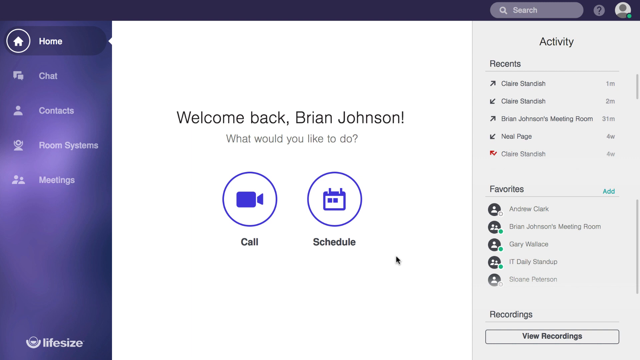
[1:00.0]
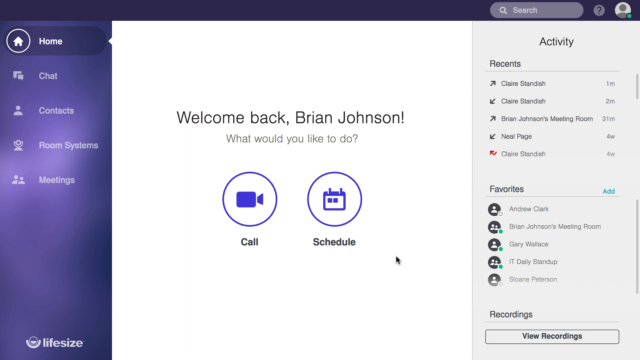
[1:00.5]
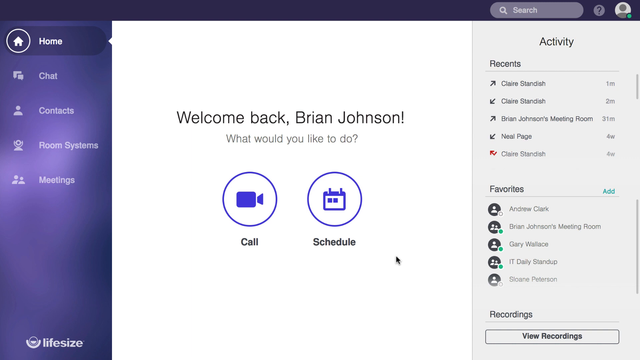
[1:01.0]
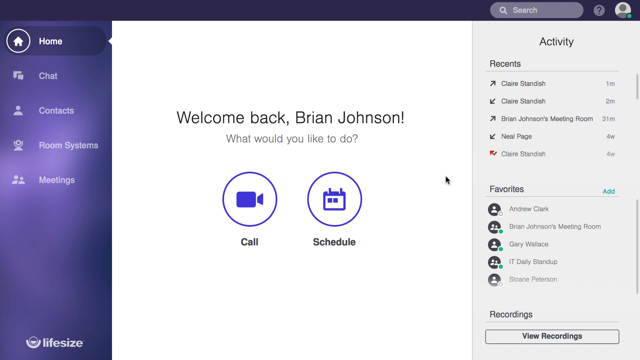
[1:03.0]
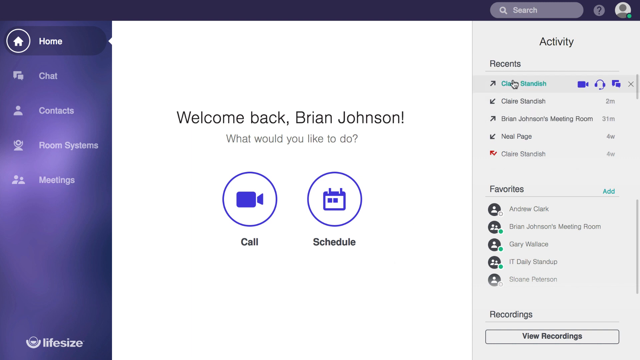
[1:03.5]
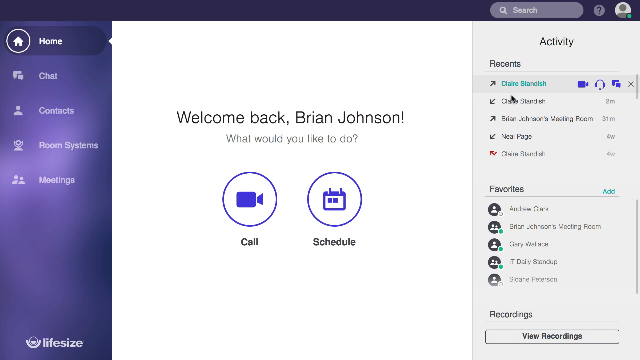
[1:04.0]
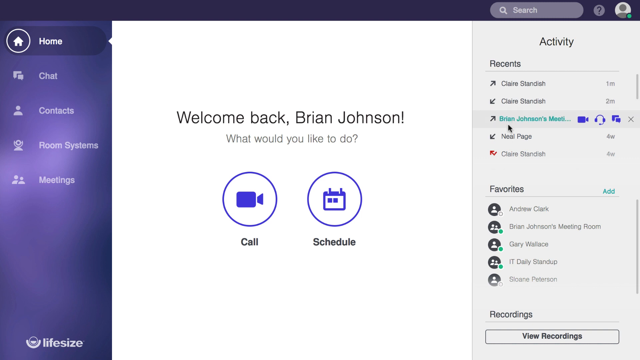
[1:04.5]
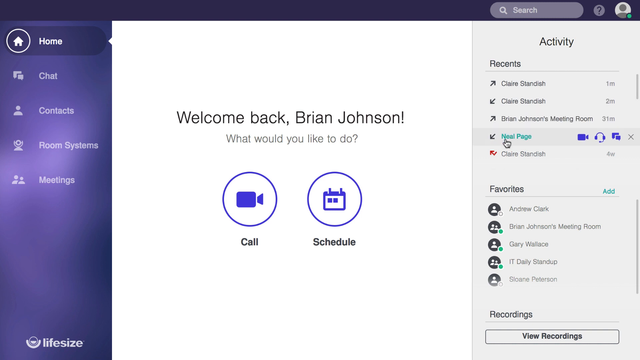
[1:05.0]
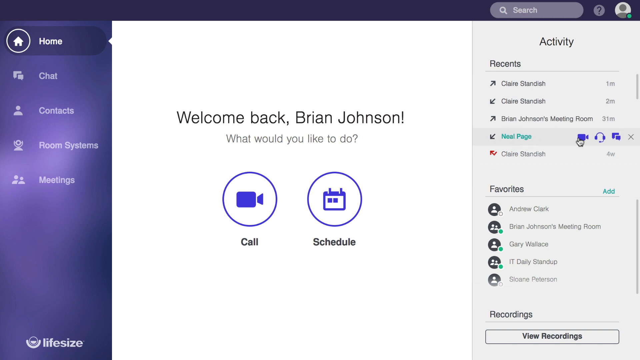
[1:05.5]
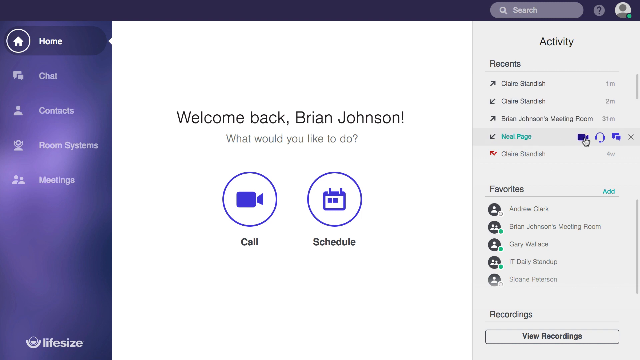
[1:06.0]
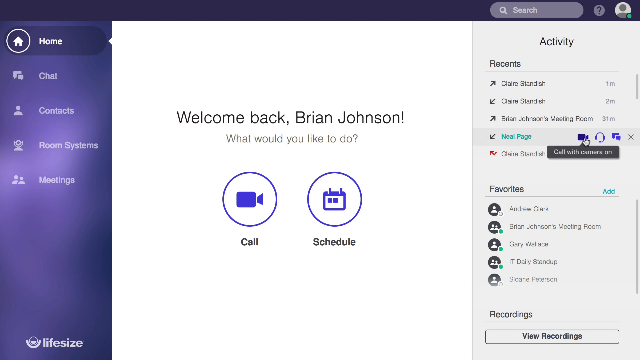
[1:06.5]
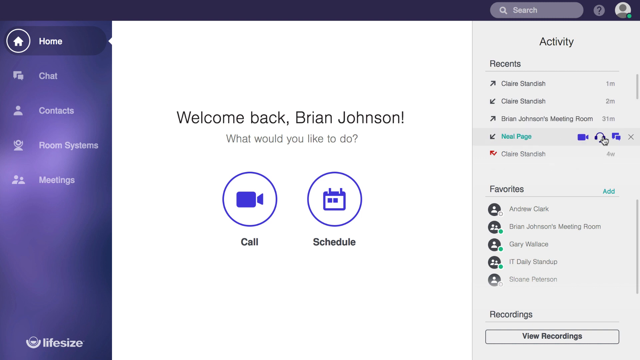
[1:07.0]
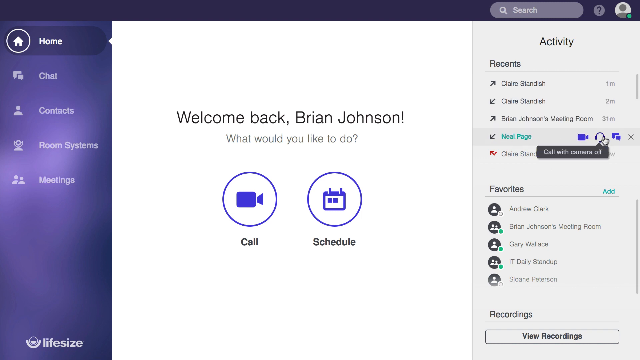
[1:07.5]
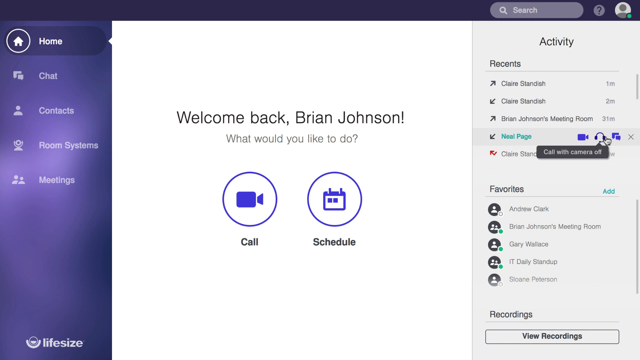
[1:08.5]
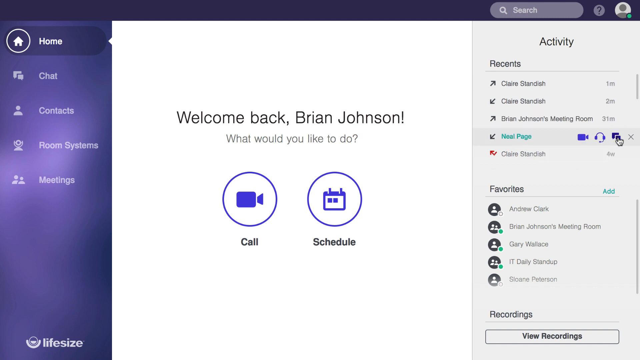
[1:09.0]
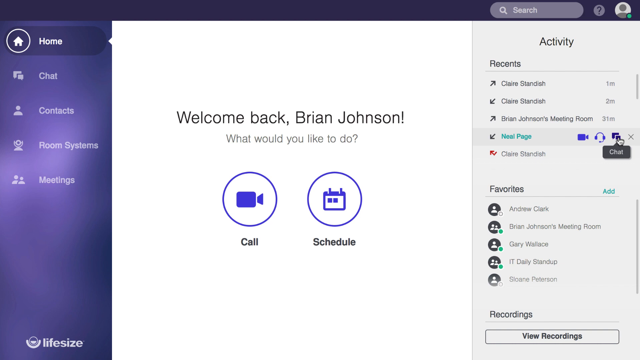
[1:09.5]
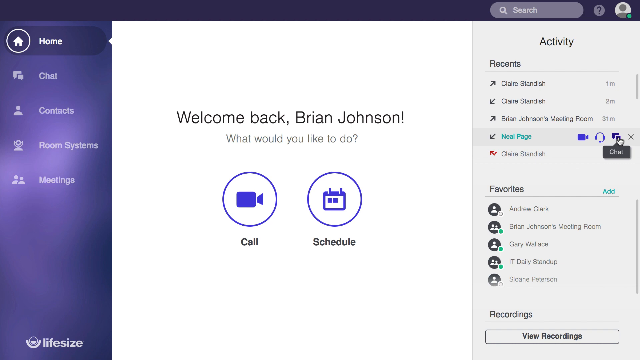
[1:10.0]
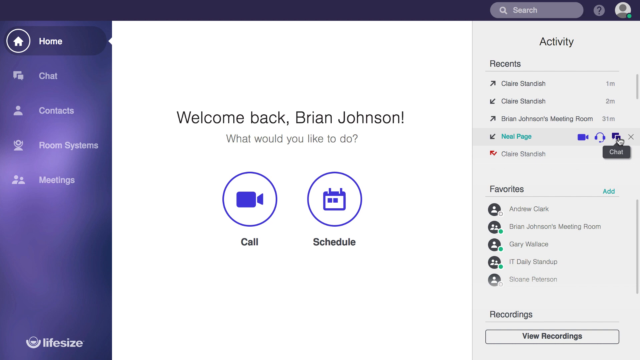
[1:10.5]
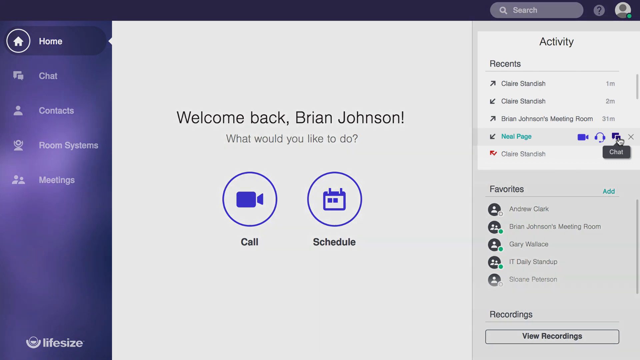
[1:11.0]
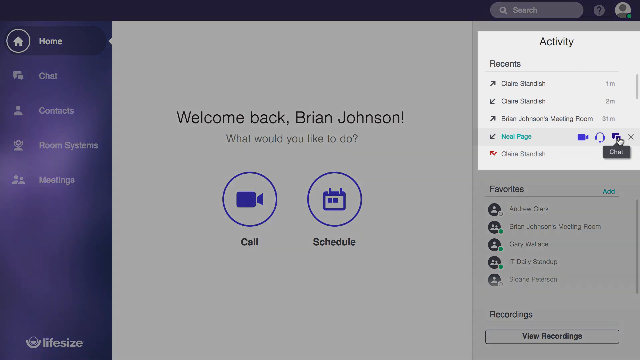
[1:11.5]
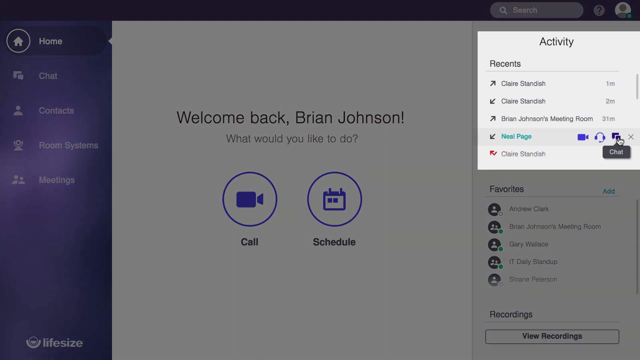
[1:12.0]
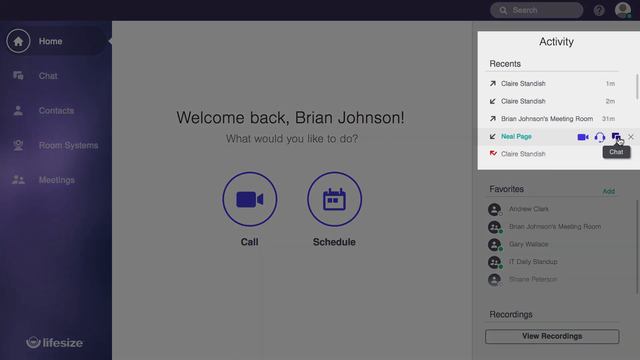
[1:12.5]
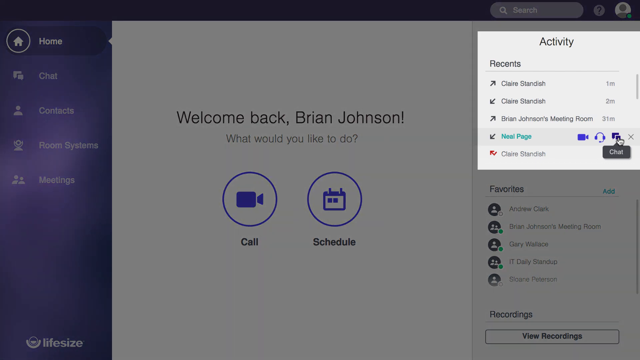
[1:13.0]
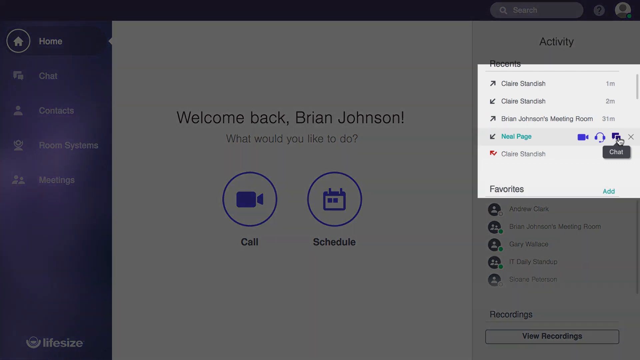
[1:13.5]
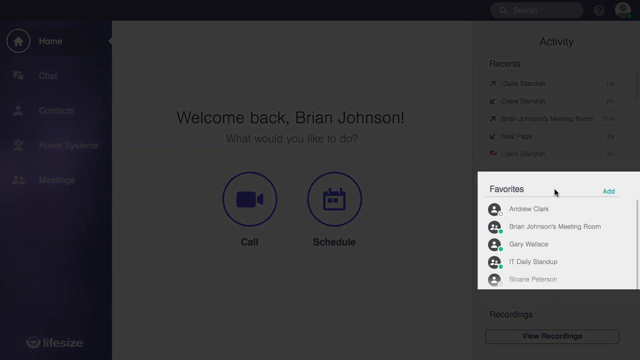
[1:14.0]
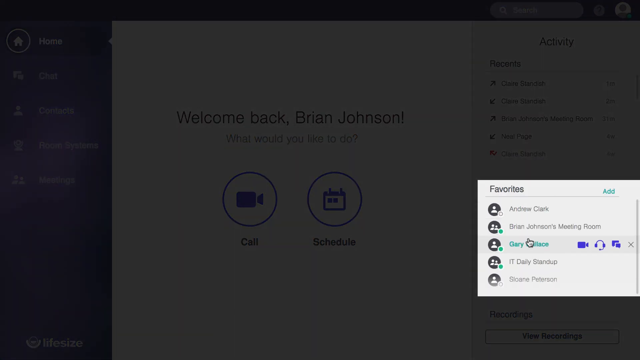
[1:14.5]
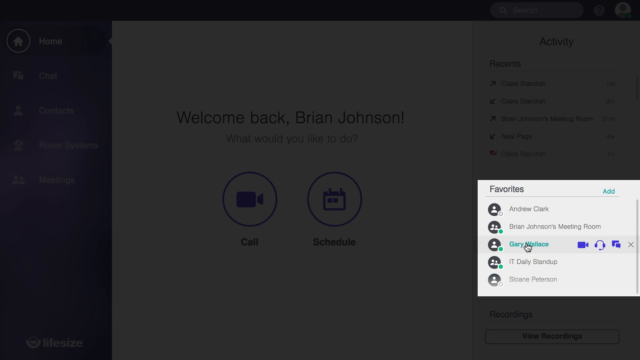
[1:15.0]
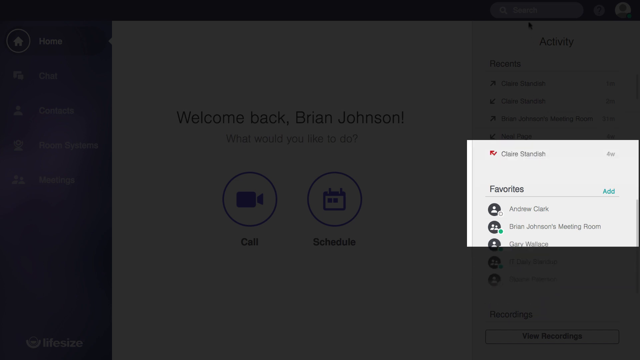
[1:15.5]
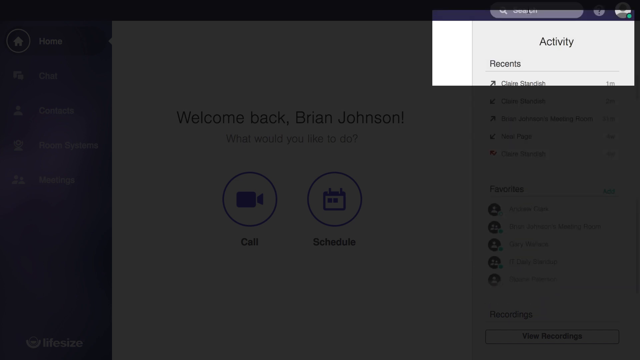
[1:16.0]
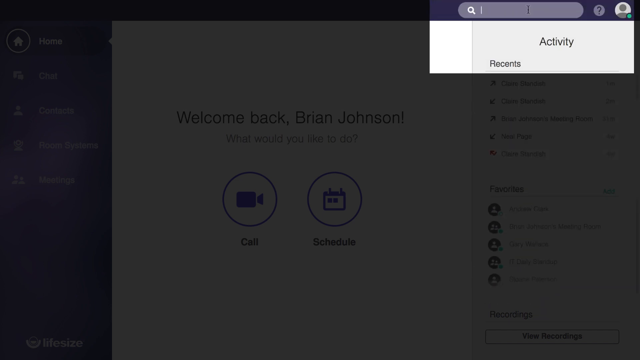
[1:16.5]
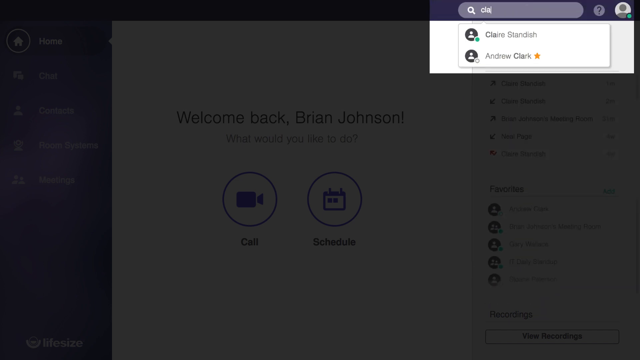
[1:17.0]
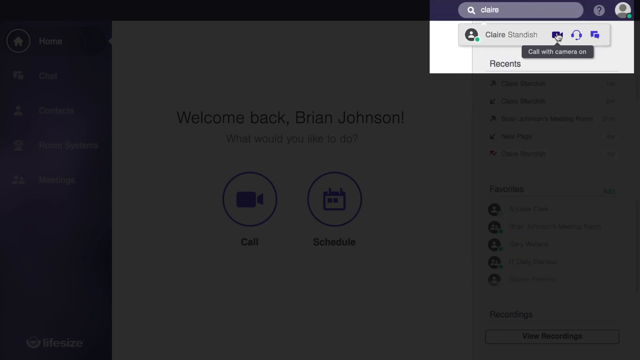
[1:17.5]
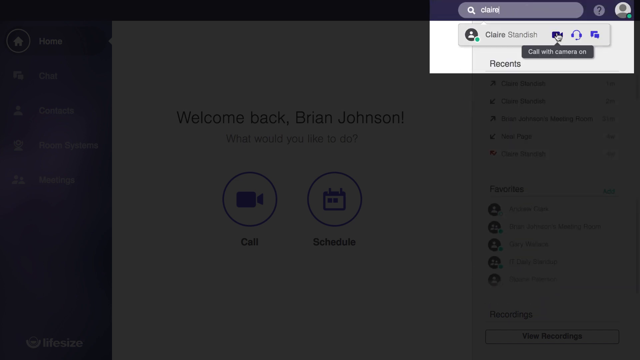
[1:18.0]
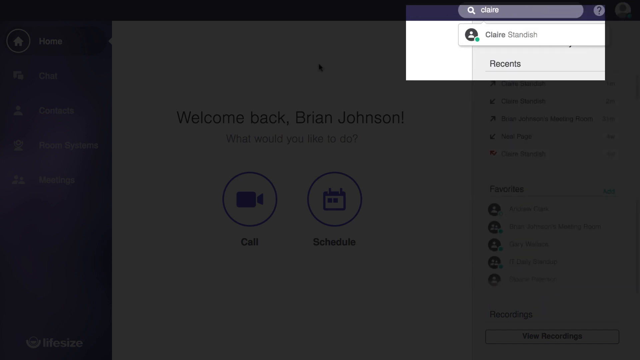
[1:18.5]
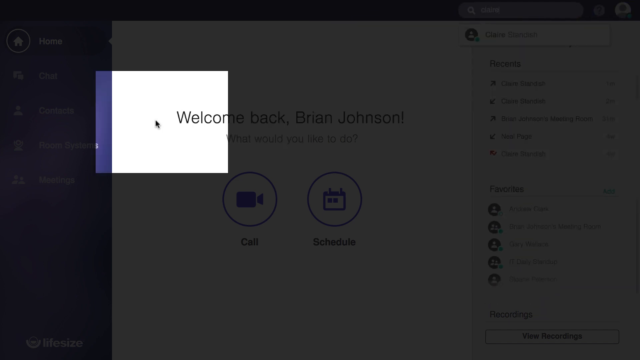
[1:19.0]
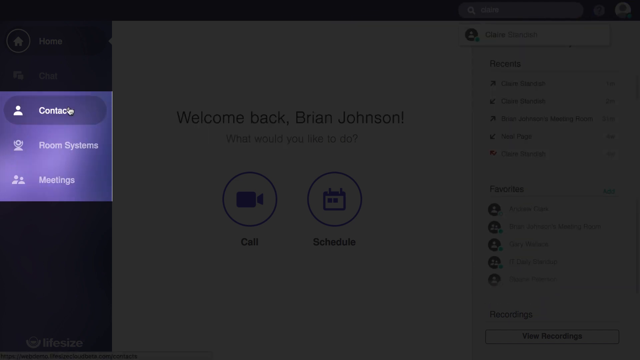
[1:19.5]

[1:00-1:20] A computer screen shows a video conferencing program on its opening page, which says "Welcome back, Brian Johnson! What would you like to do?" Below it are a button with a camera in it labeled Call and a button with a calendar in it labeled Schedule. On the right side of the screen is an activity log. The cursor moves down the list of contacts and highlights the name Neal Page, stopping over each of the function icons to the right of the contact. It briefly moves down to the Favorites list and highlights the name Gary Wallace. It then moves up to the search bar and begins typing the contact name Claire Standish. Finally it moves to the left of the page and briefly clicks on the Contact button.